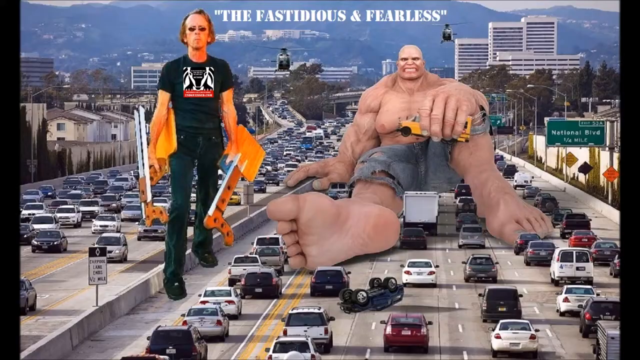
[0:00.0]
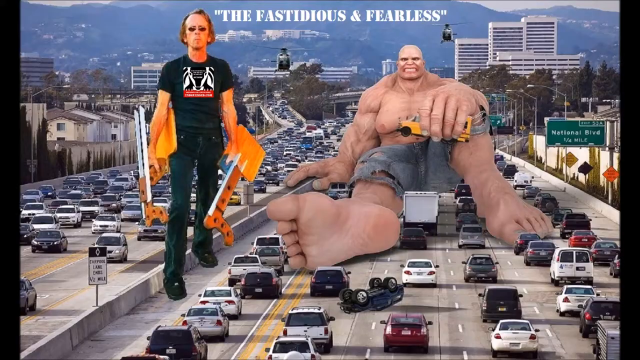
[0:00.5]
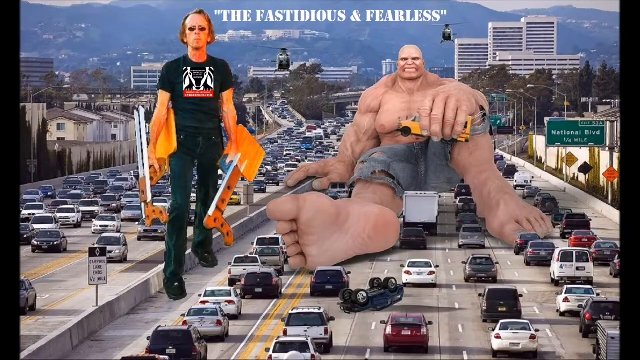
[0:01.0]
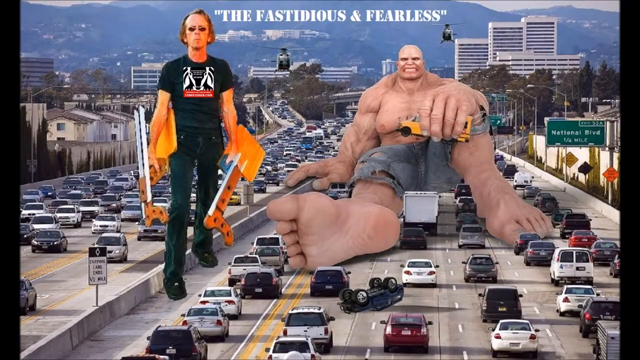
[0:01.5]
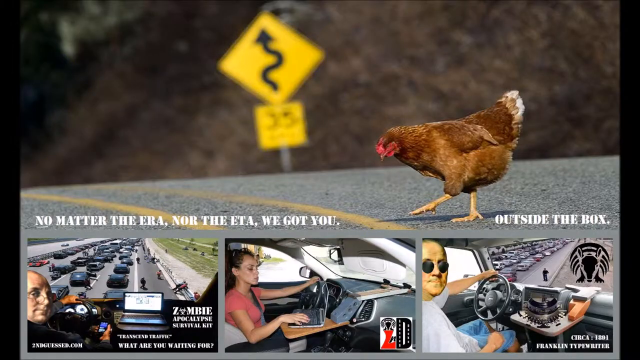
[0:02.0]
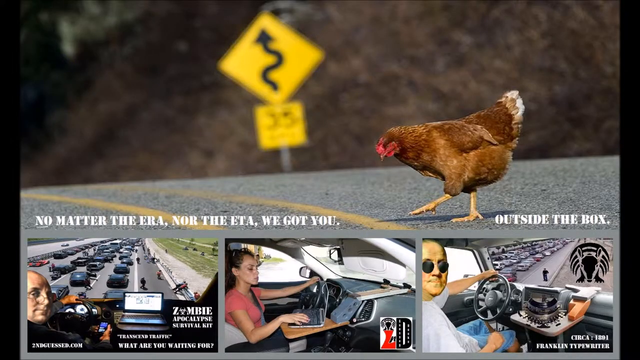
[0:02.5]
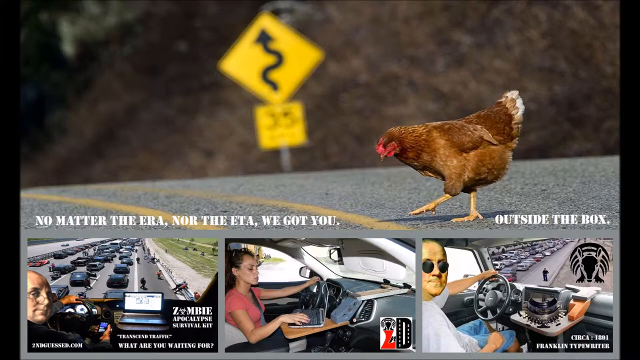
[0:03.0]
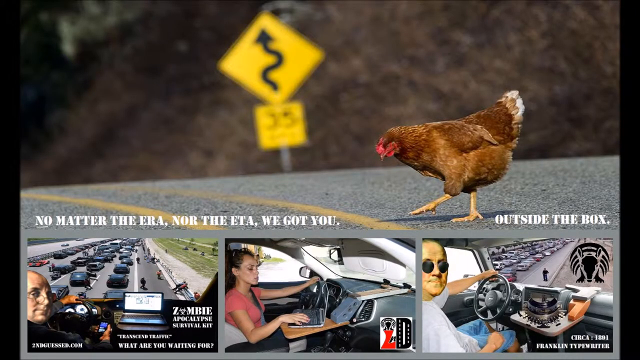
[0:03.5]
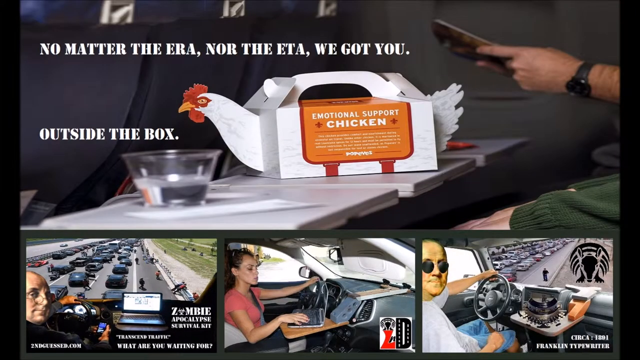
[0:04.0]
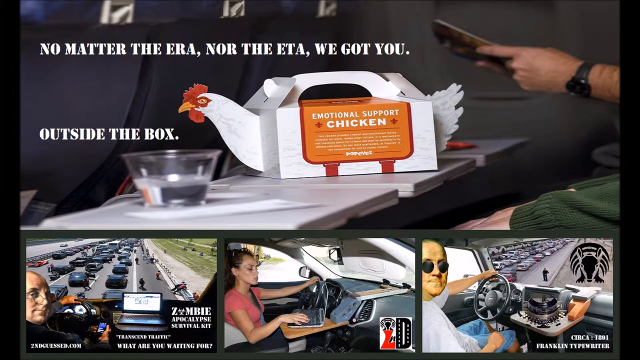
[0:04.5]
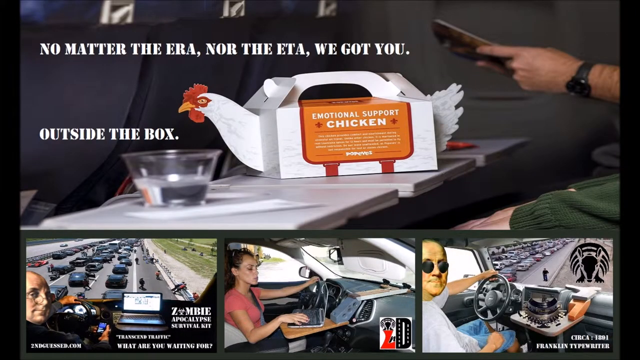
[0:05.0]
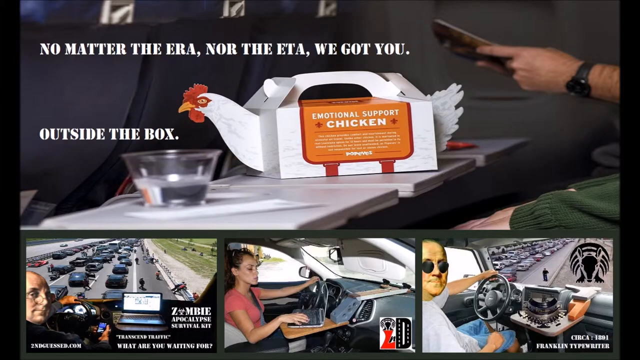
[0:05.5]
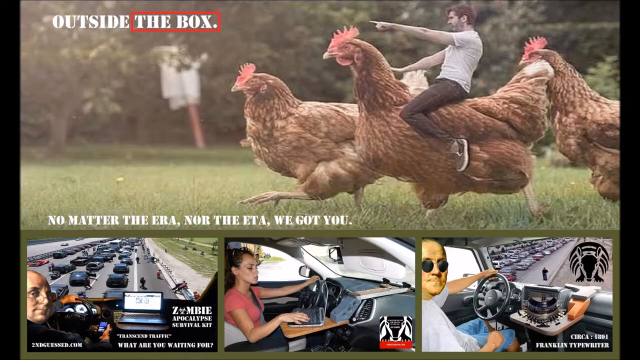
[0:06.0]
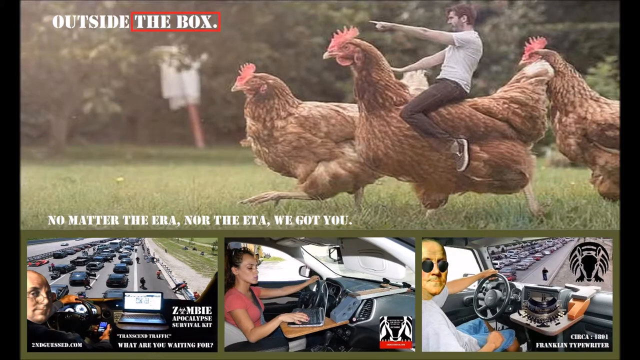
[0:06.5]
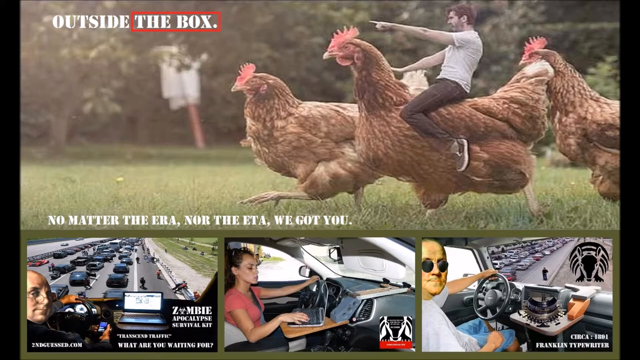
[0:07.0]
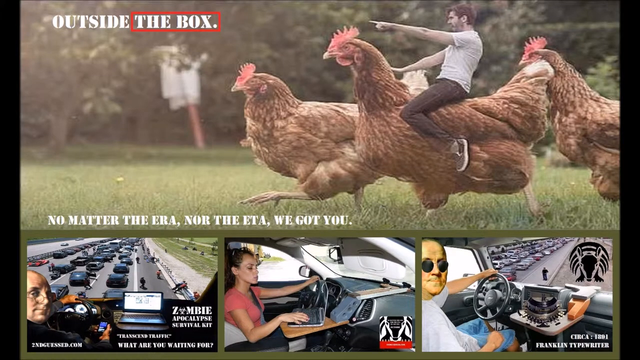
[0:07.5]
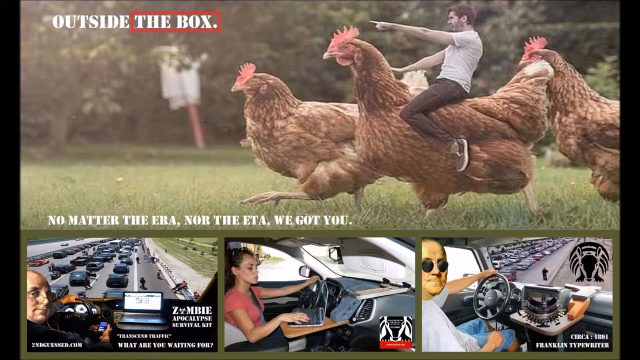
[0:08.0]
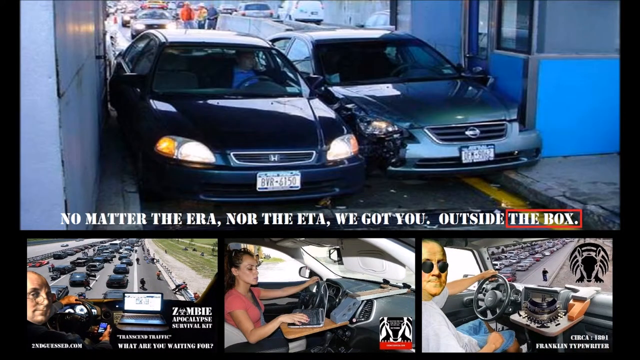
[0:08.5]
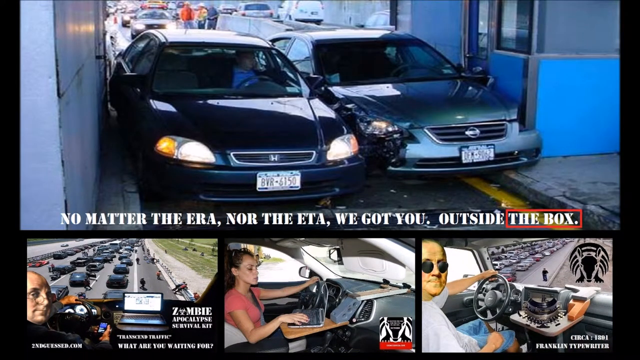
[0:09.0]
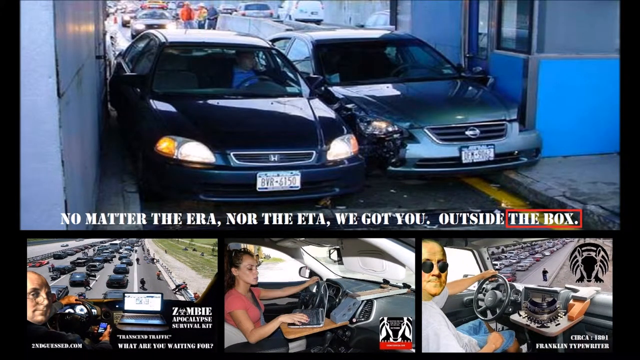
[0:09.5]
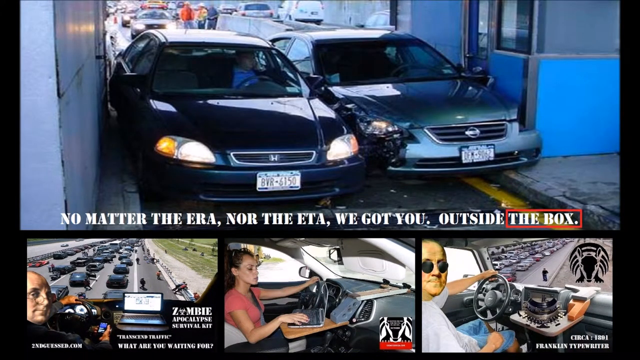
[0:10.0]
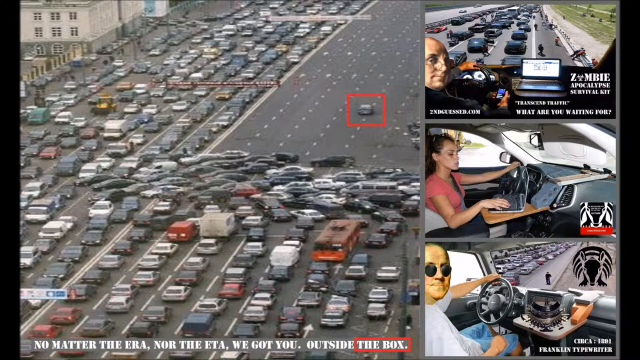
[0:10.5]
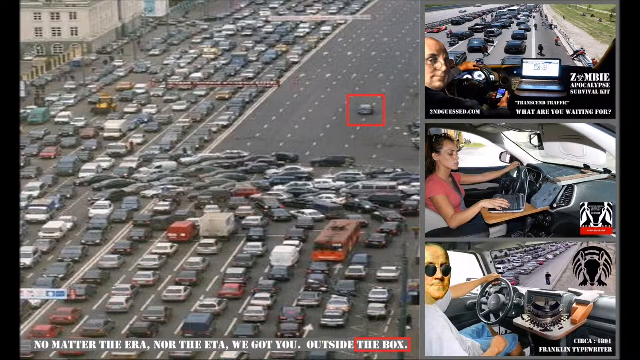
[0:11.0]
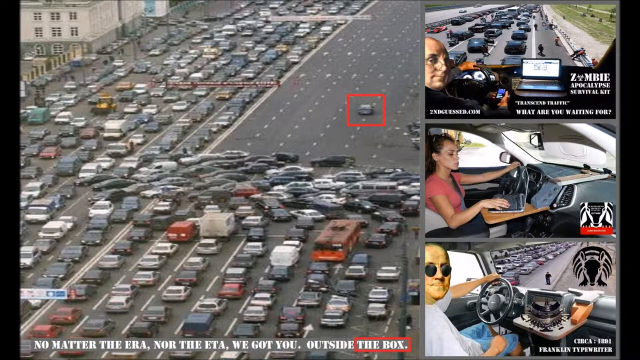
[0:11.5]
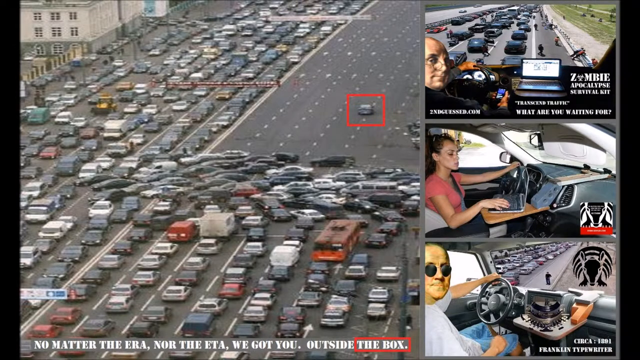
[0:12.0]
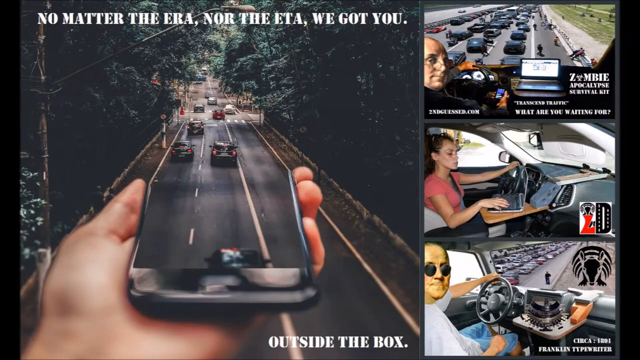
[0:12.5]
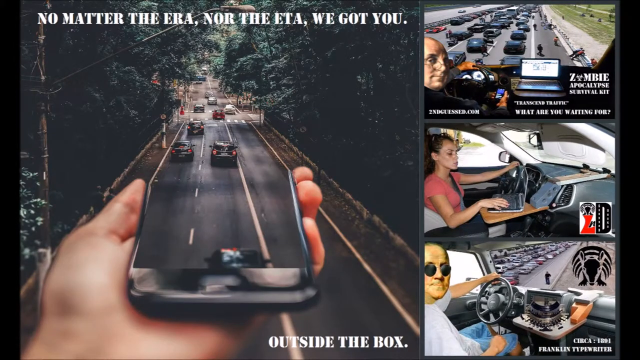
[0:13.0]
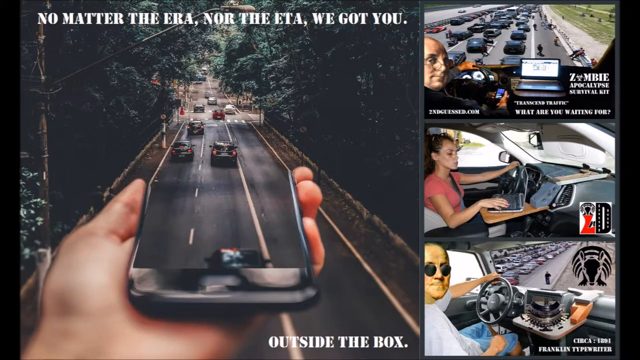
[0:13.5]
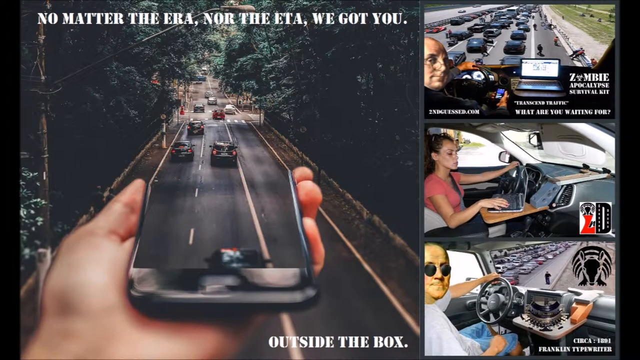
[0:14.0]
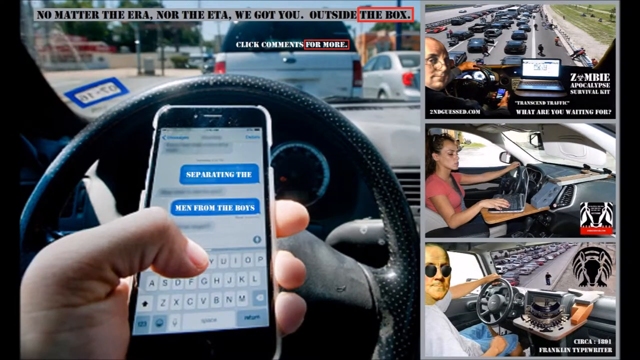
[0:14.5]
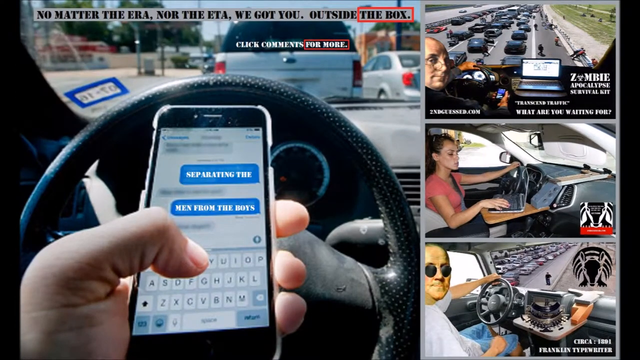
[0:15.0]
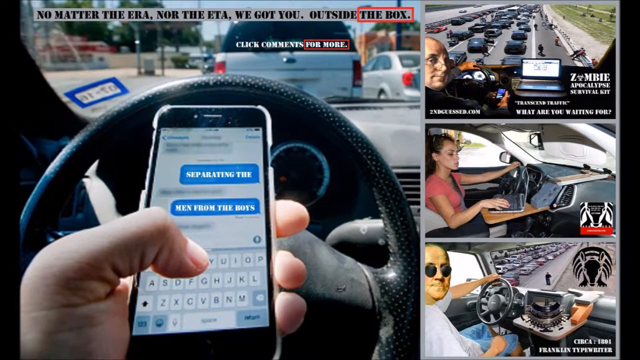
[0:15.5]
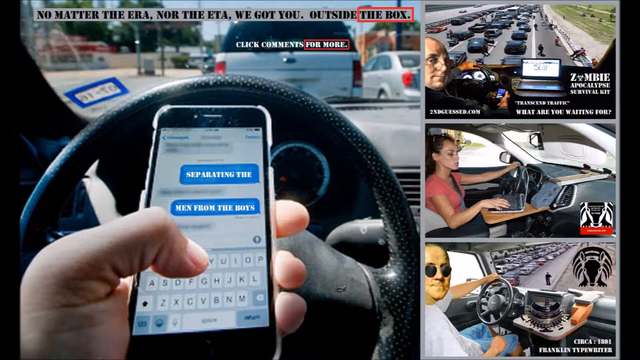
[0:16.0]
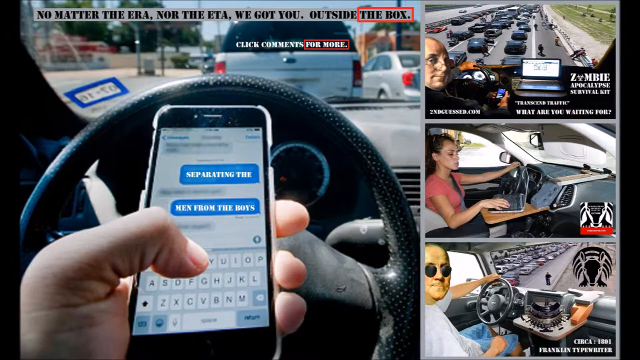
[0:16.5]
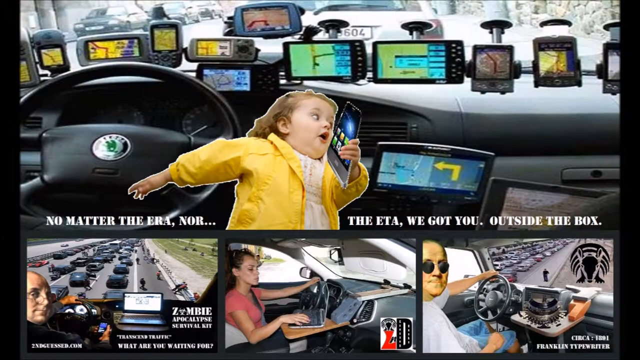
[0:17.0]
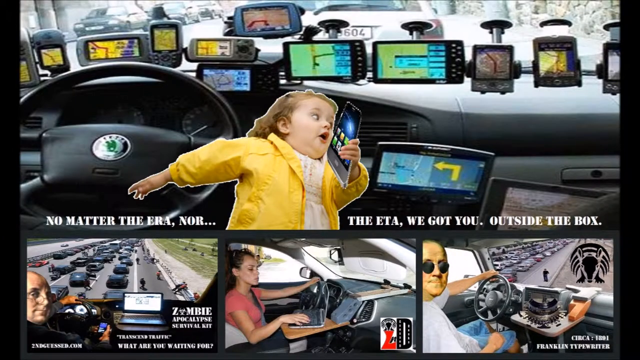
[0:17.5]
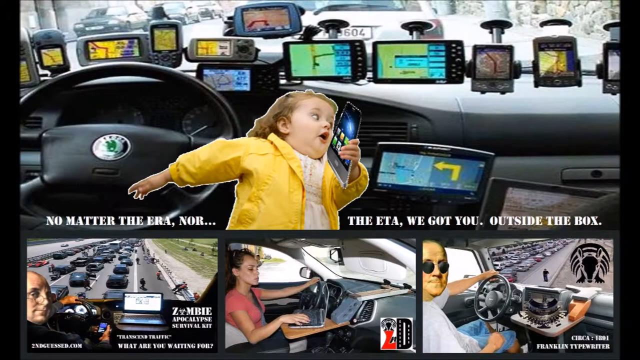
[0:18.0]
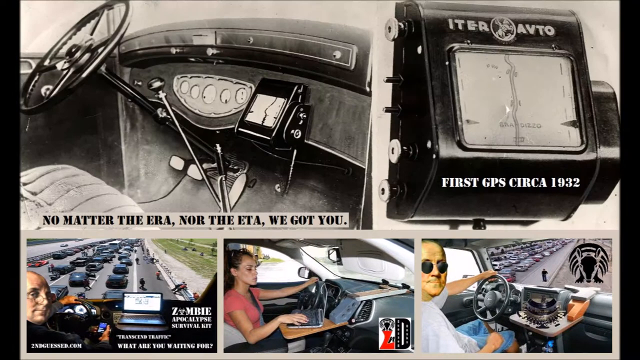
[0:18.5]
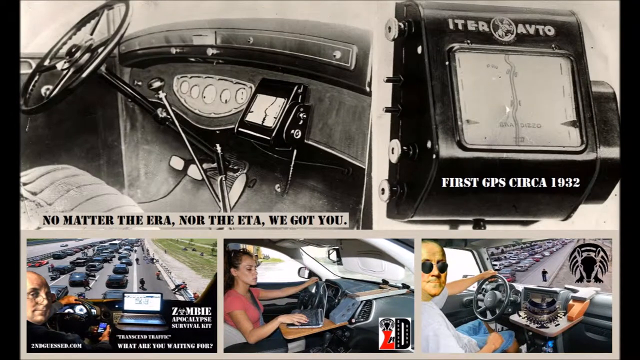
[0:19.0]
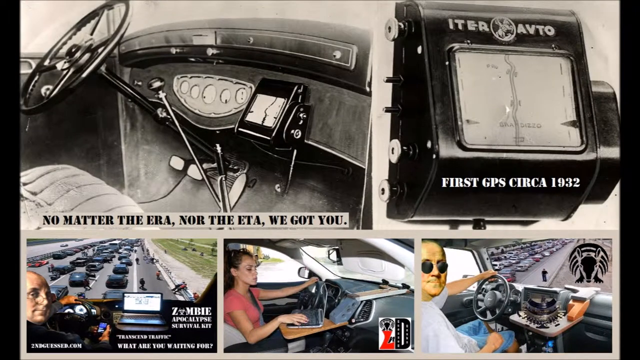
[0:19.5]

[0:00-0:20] The video has the title "the fastidious and fearless". It opens on a scene reminiscent of Los Angeles: a freeway with about eight lanes of traffic going in each direction, a huge road with concrete crash barriers between the two directions. The area looks very dry, and big office blocks are visible in the far distance. Two men are superimposed over this. One is very tall, wears only a pair of ripped jeans, and has a bald head and lots of muscles; the other wears a black t-shirt and jeans and holds two plastic-looking devices. A chicken crosses a road, and various people drive their cars on the freeway. Text reads "no matter the era nor the ETA we got you outside the box". The text remains as other images follow: people riding chickens and cars caught in a car park. The aftermath of a huge pileup on the freeway appears. Many images come in quick succession: one looks almost as if someone is lifting the road with their hand, and another shows someone using a mobile phone while driving. A child wearing a yellow rainproof coat holds a smartphone and appears to be running. Old black-and-white photos of cars follow.